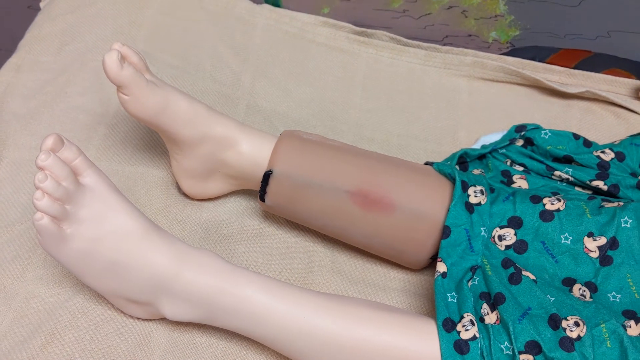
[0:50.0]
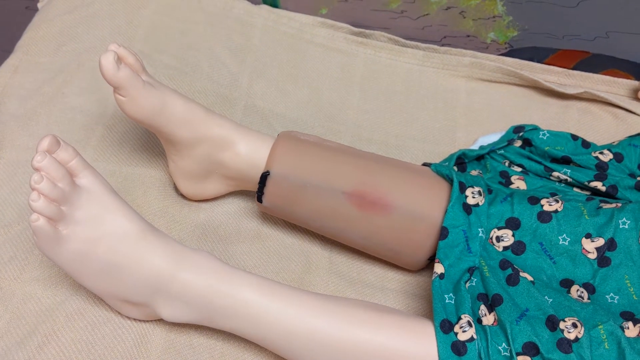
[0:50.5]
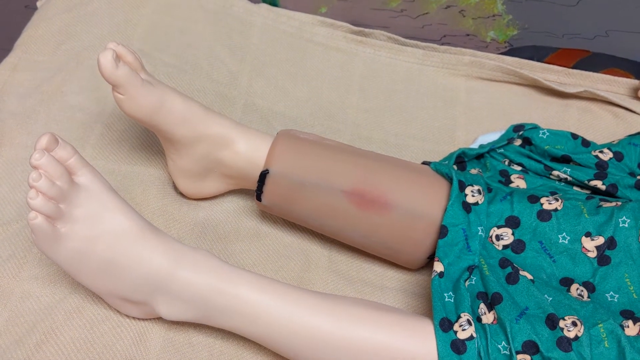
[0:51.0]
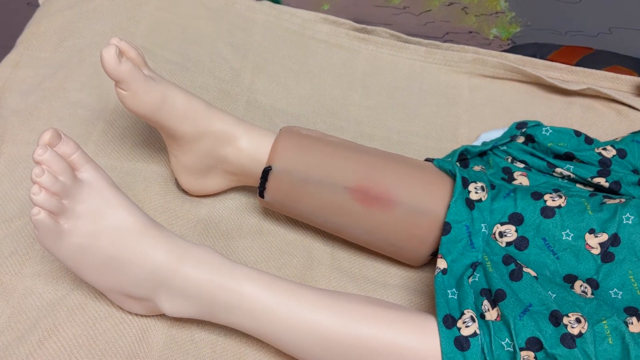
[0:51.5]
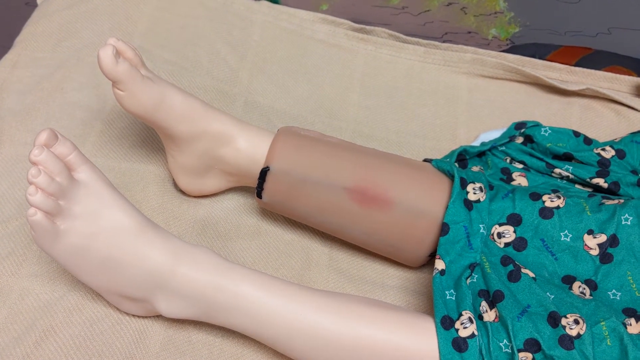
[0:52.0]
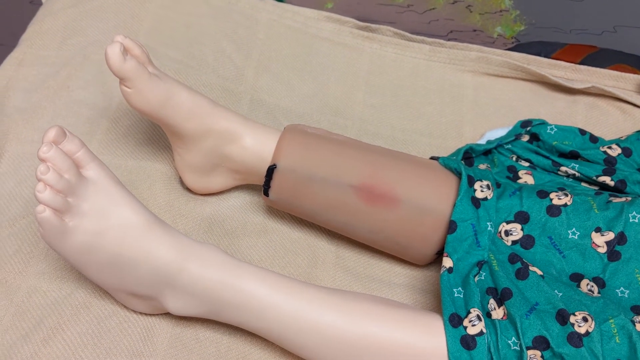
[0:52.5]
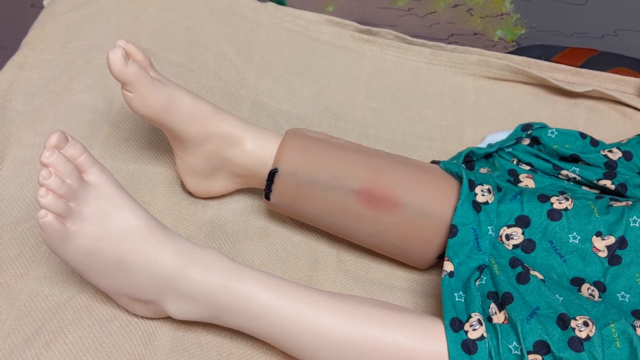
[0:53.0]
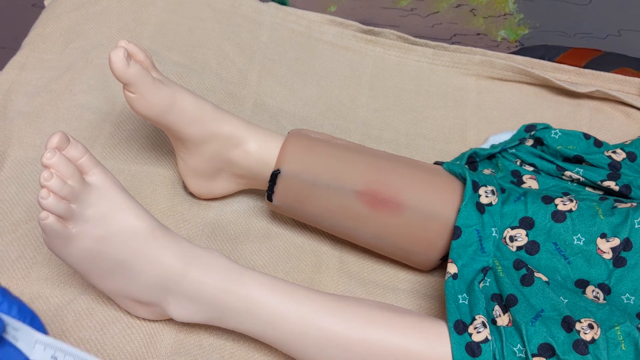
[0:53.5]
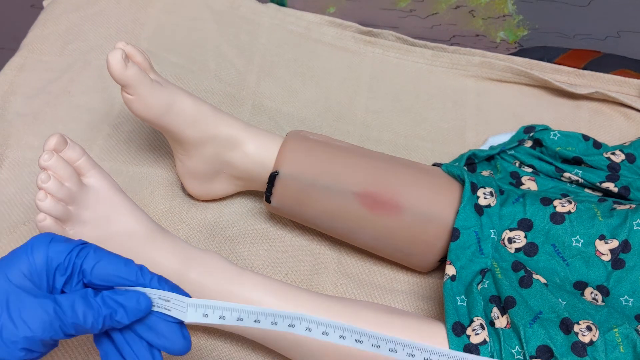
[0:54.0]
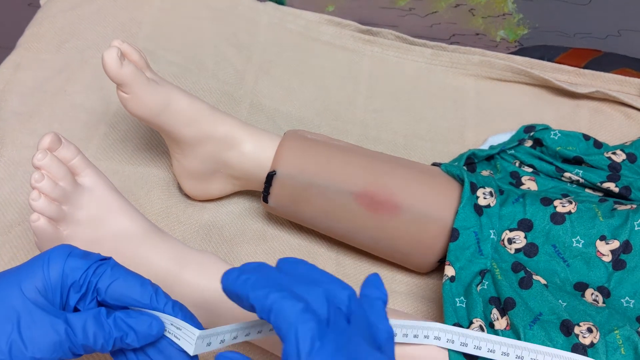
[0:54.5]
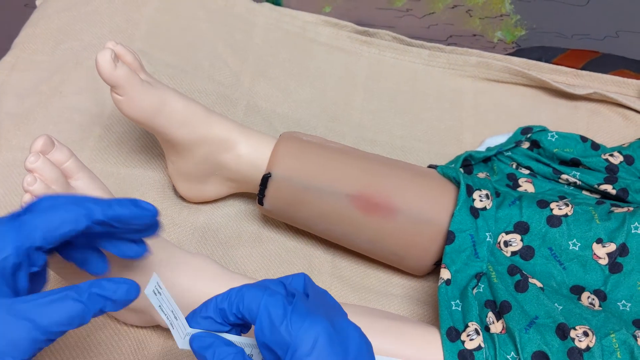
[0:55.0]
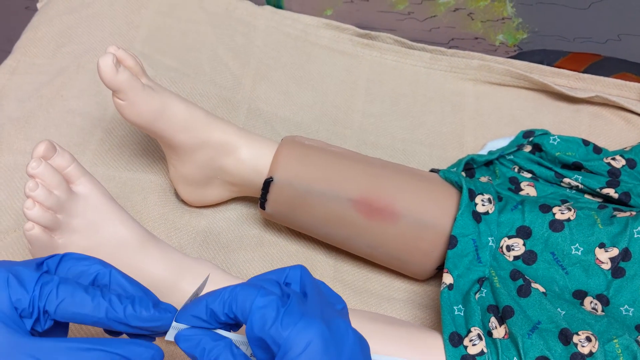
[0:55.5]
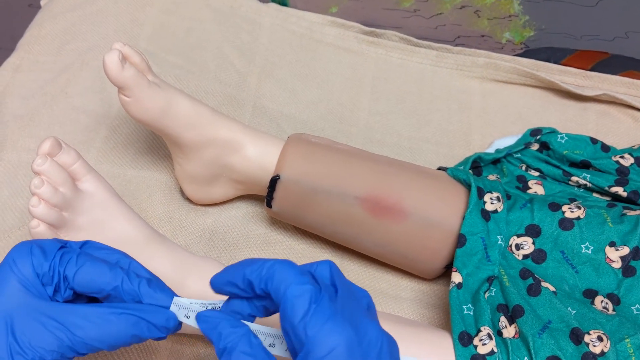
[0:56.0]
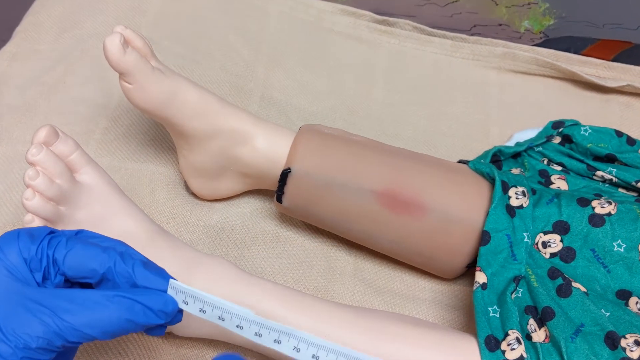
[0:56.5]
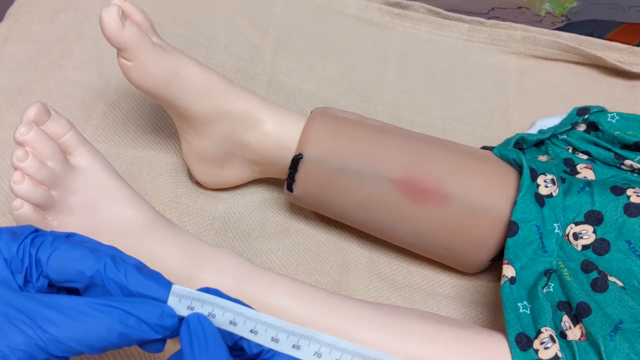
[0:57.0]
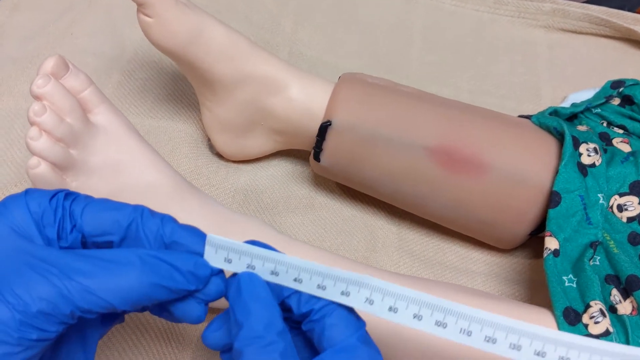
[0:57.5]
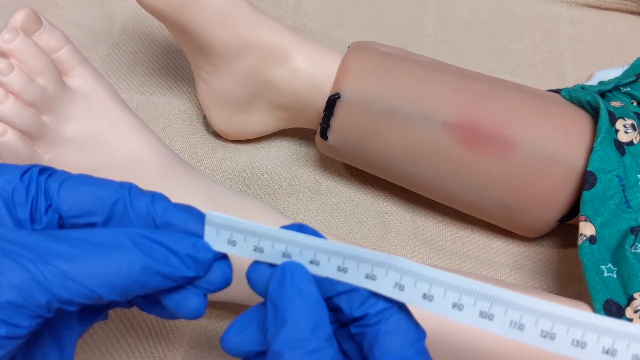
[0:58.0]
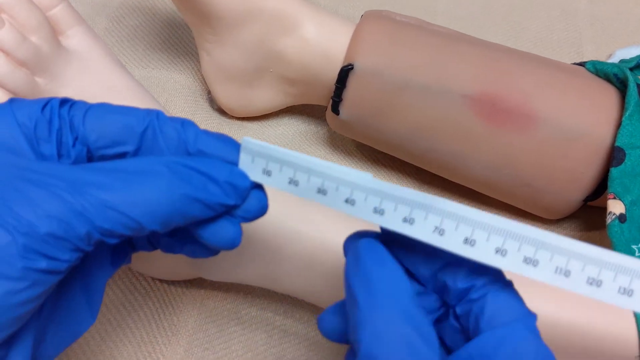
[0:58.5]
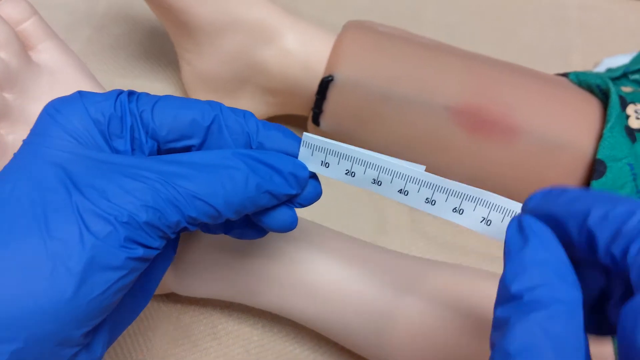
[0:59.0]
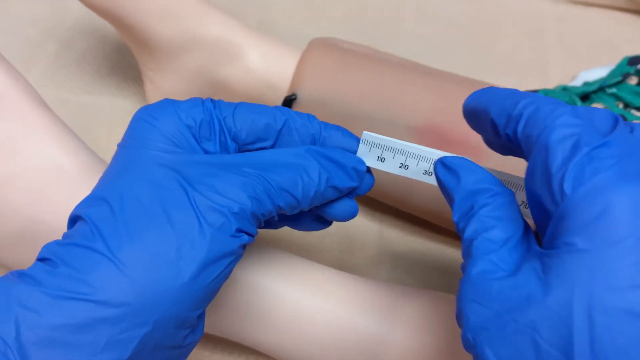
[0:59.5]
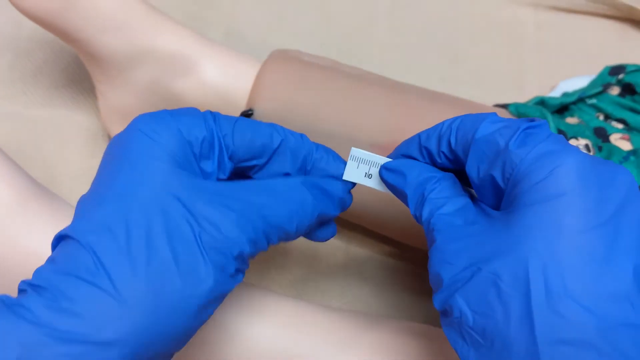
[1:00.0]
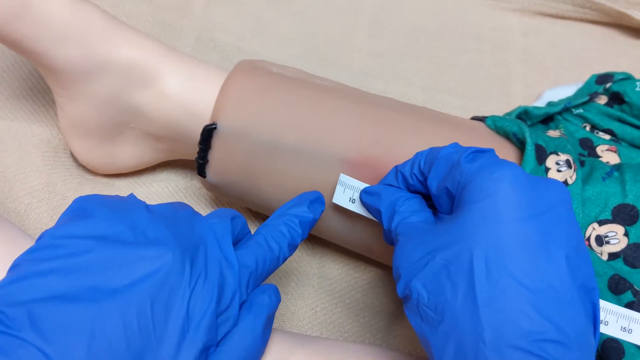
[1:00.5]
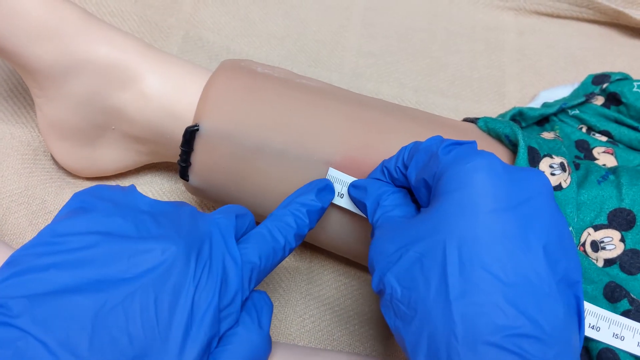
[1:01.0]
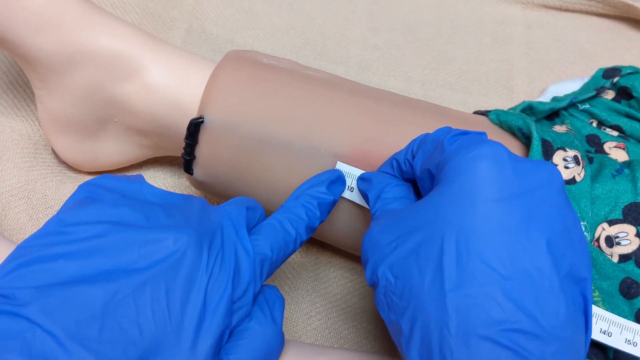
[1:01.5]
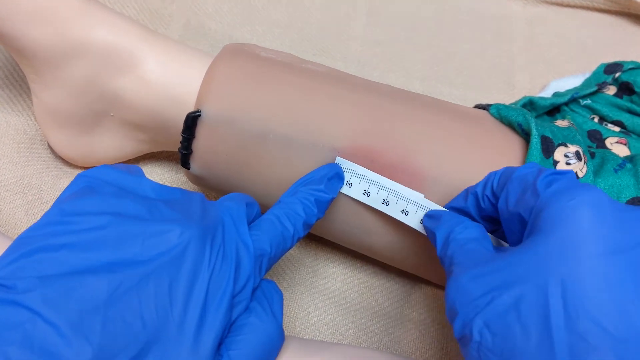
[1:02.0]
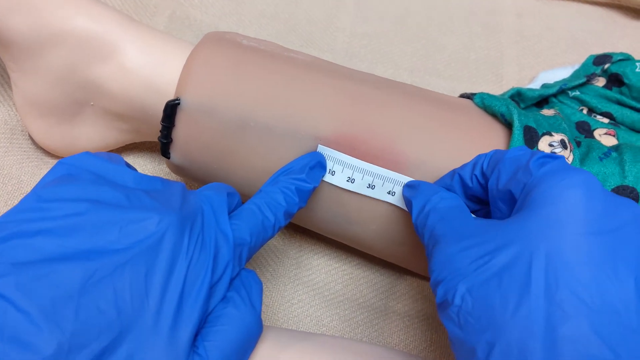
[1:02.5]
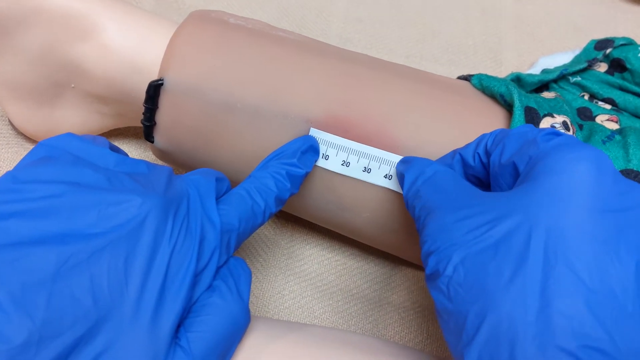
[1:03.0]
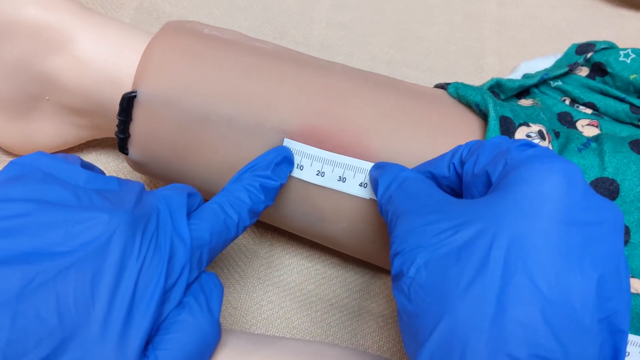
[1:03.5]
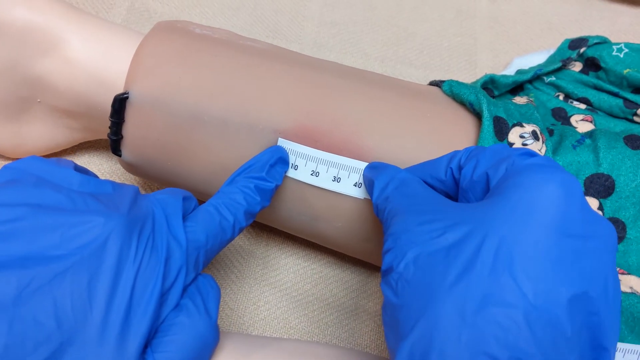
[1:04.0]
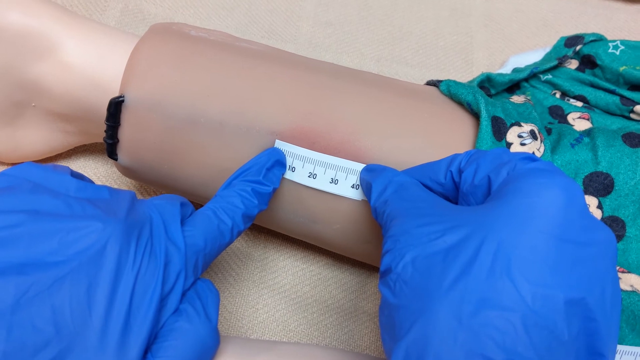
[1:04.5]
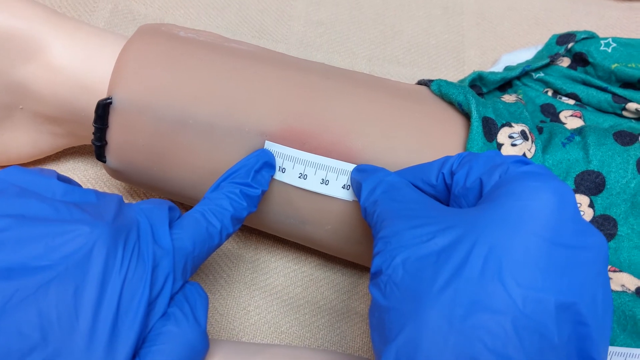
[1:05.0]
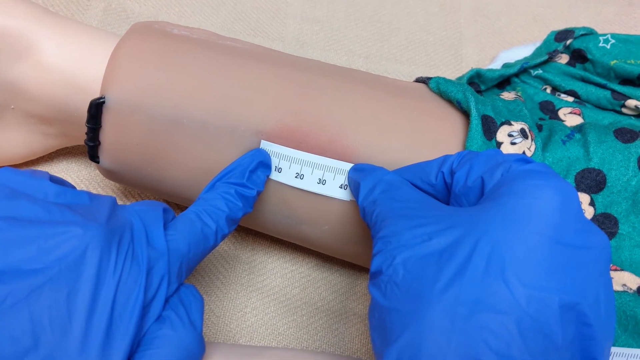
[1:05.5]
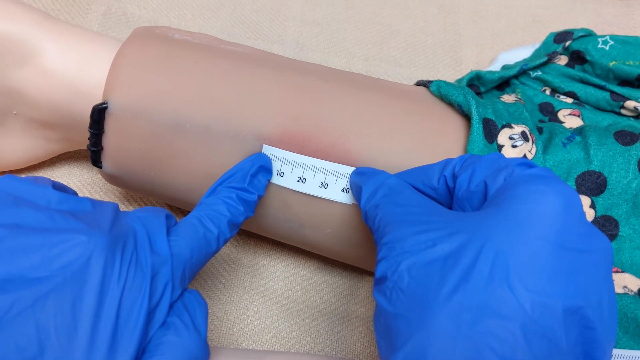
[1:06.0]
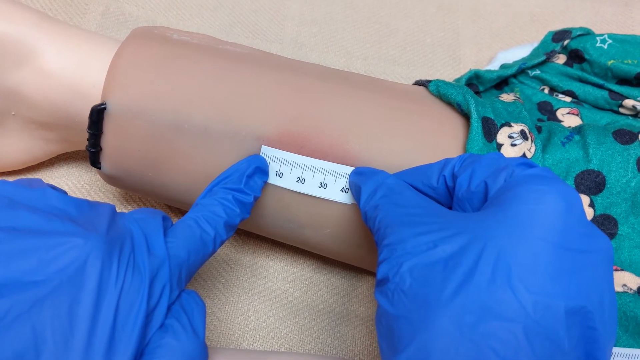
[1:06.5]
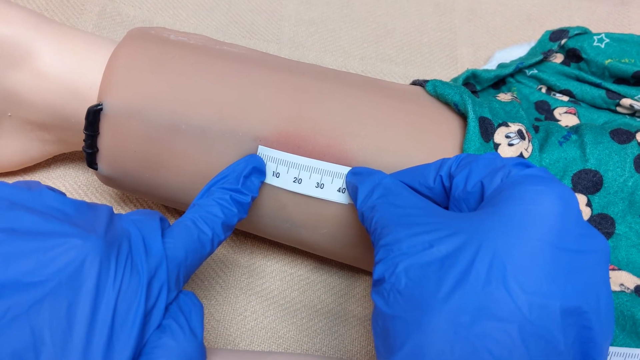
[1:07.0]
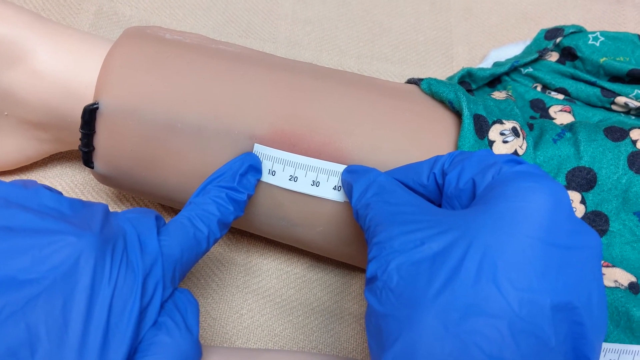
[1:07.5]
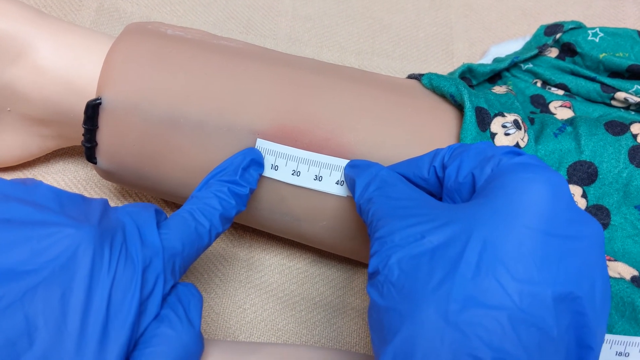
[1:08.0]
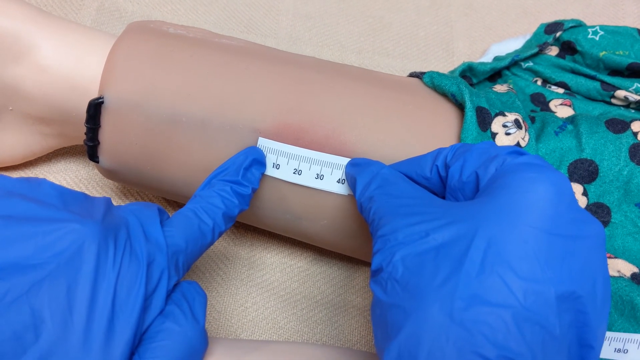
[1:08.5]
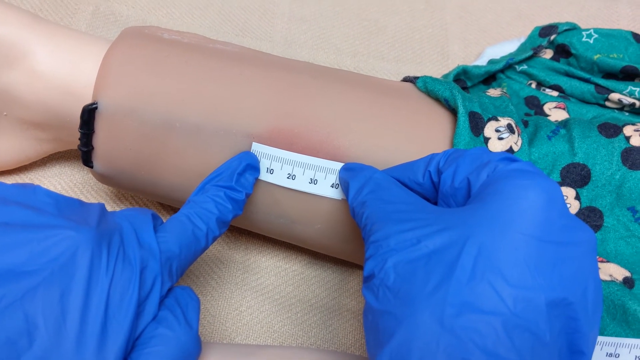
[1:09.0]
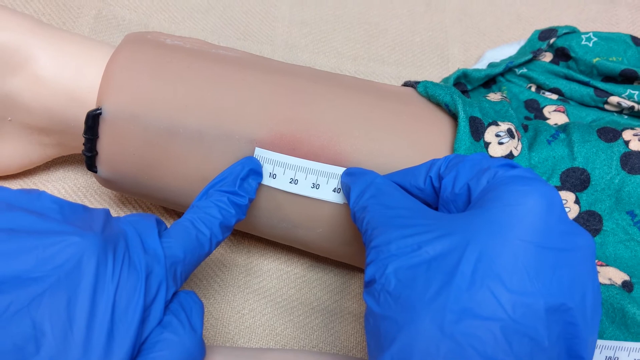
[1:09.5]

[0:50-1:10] The red mark left by the needle is visible, along with a faint blue line running down the device on the child's leg, which seems to represent a vein for training medical personnel to practice on. The person holds what seems to be a paper measuring tape and folds the left side down so it starts from the zero mark. They then hold it up to the red site on top of the child's leg, which measures about 40 millimeters long. The person holds the left side of the measuring tape with the left pointer finger and uses the right thumb to press it down on the skin. The measuring tape is taken off after the person gets the measurement. The tan sheet the mannequin is lying on is slightly rolled up at the sides, revealing that it has been doubled.